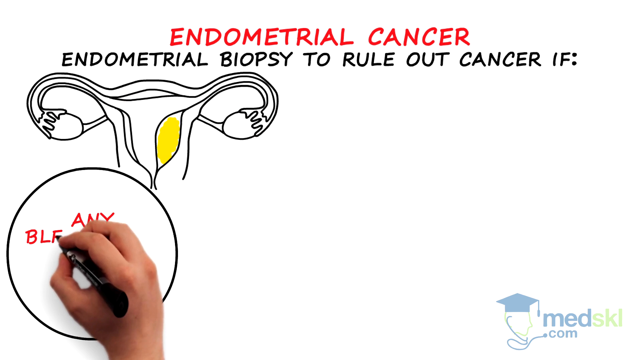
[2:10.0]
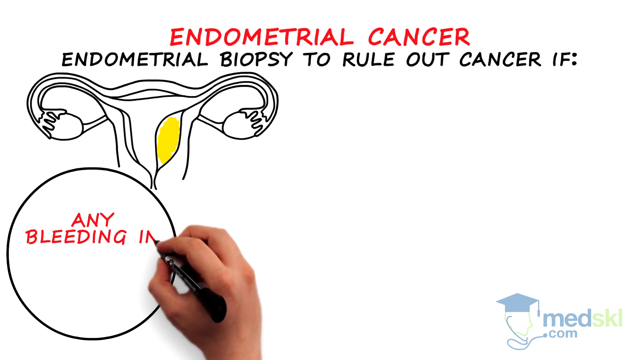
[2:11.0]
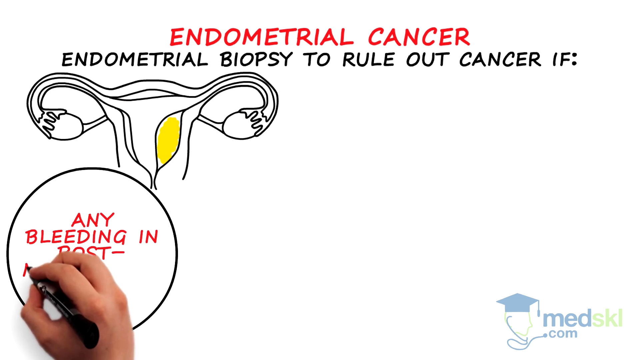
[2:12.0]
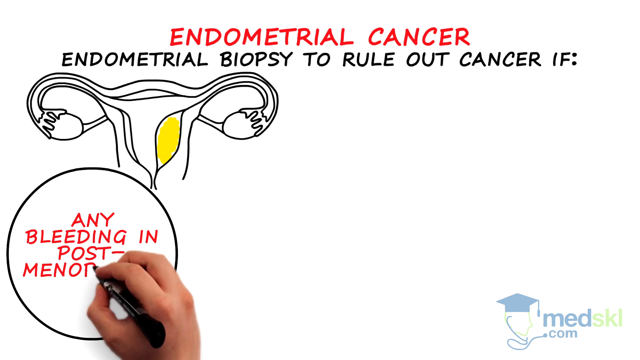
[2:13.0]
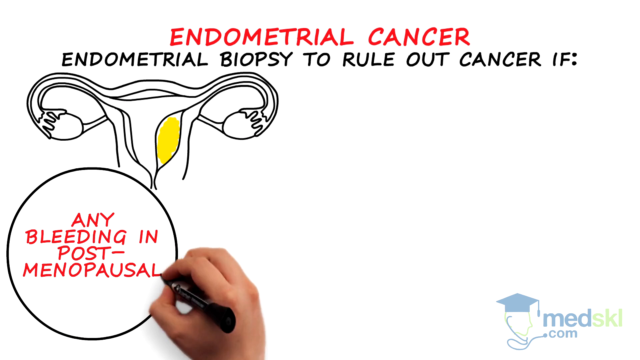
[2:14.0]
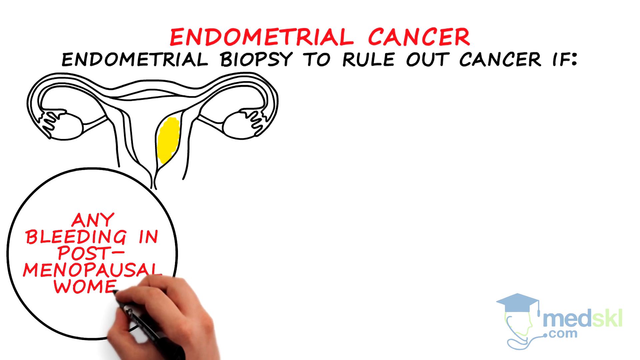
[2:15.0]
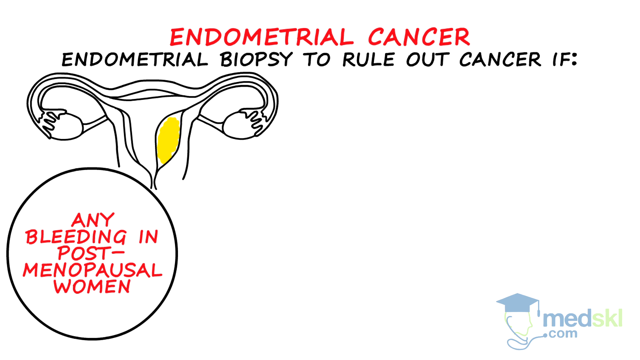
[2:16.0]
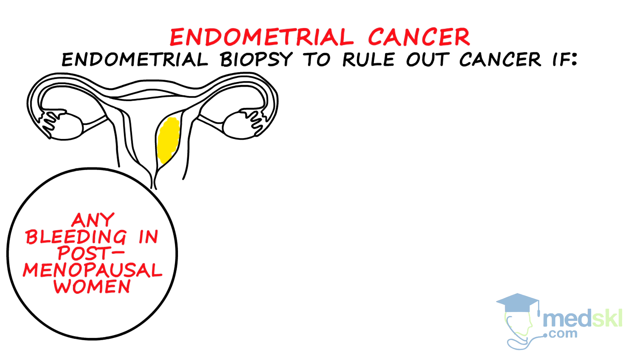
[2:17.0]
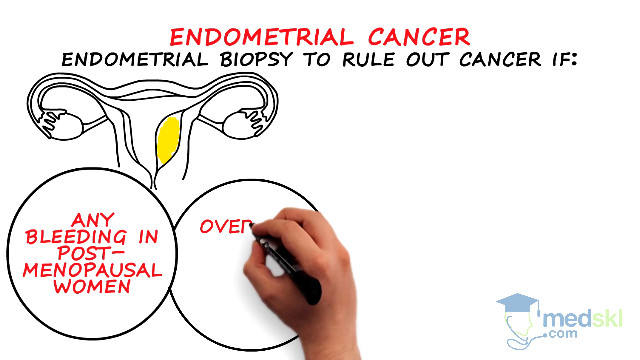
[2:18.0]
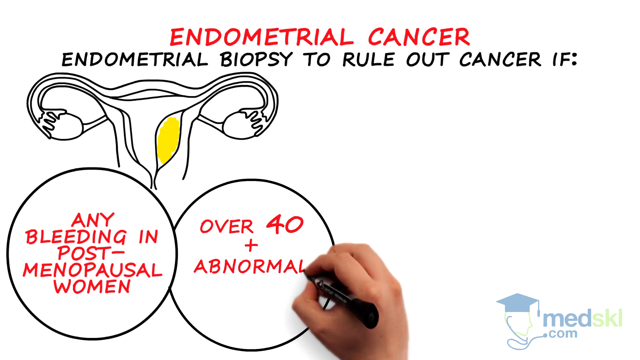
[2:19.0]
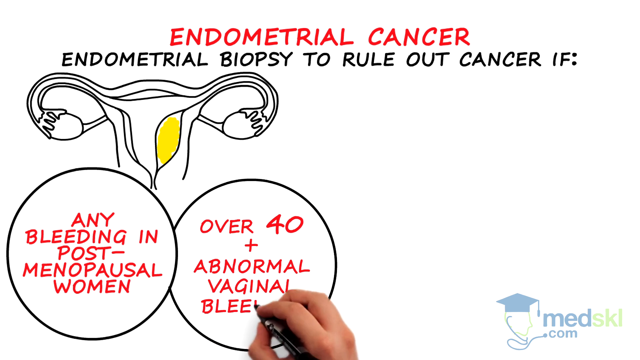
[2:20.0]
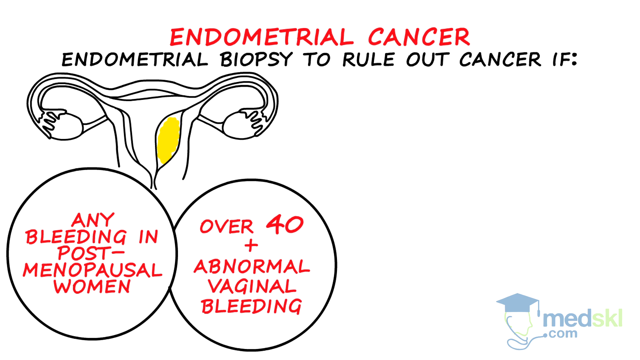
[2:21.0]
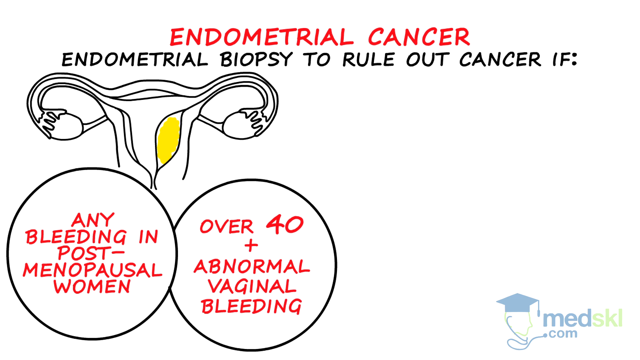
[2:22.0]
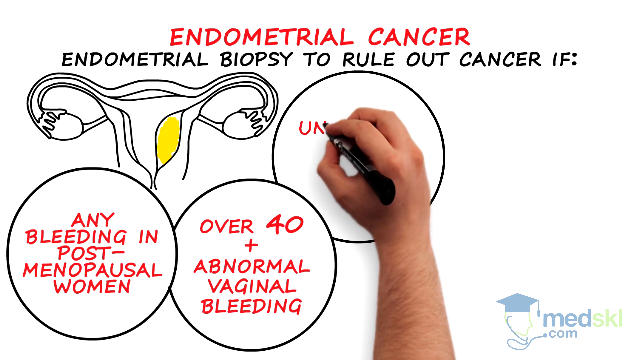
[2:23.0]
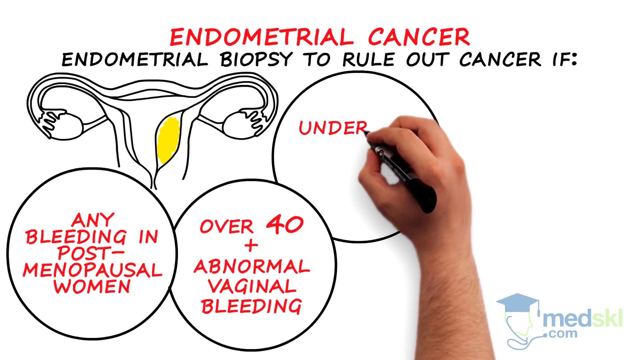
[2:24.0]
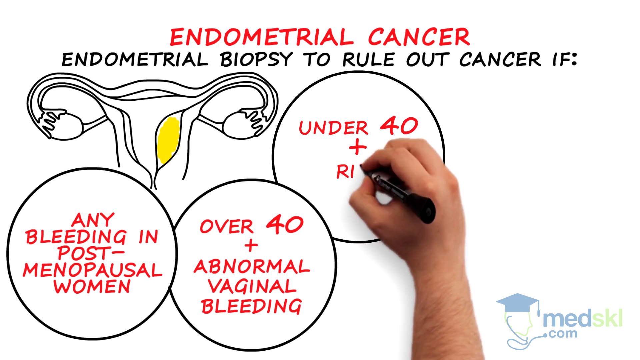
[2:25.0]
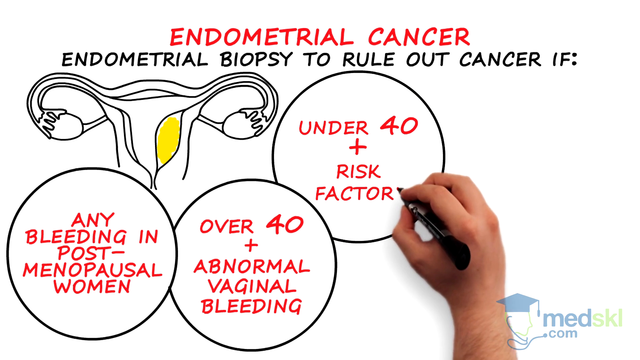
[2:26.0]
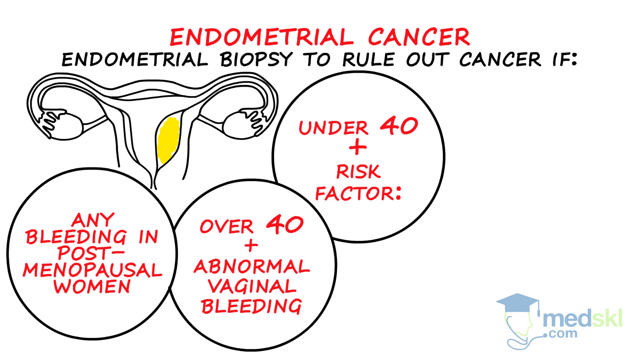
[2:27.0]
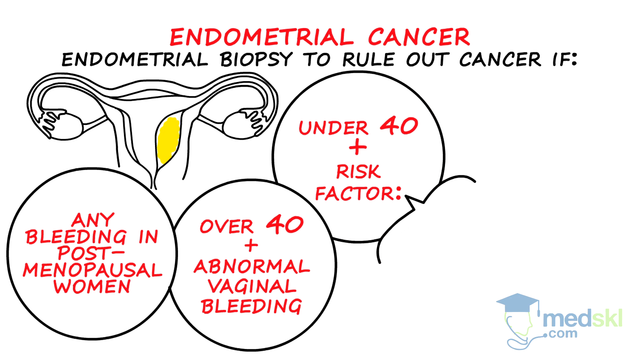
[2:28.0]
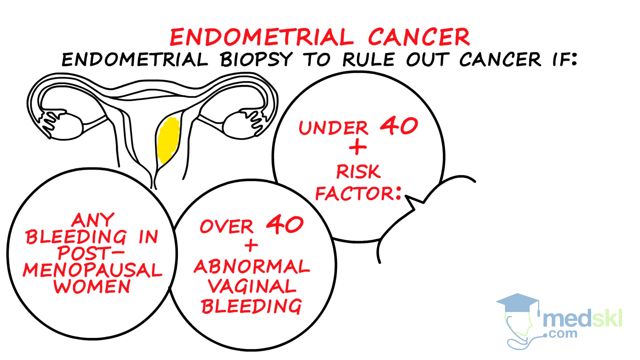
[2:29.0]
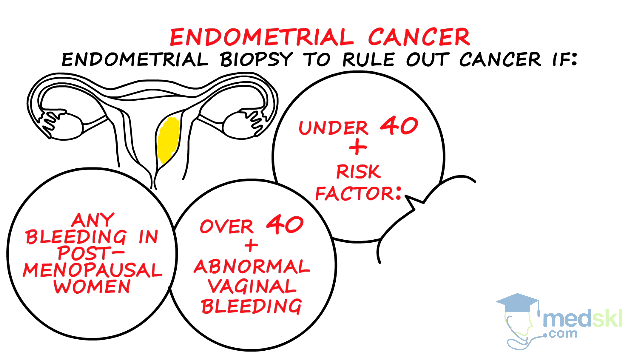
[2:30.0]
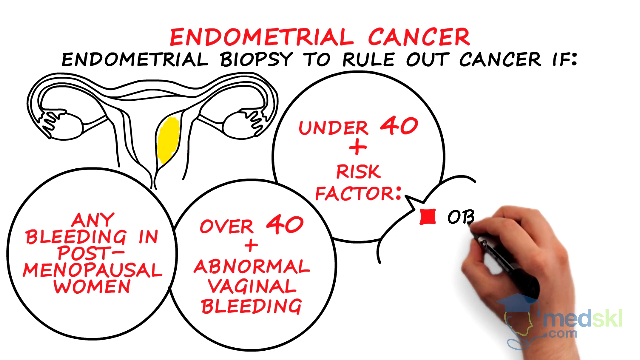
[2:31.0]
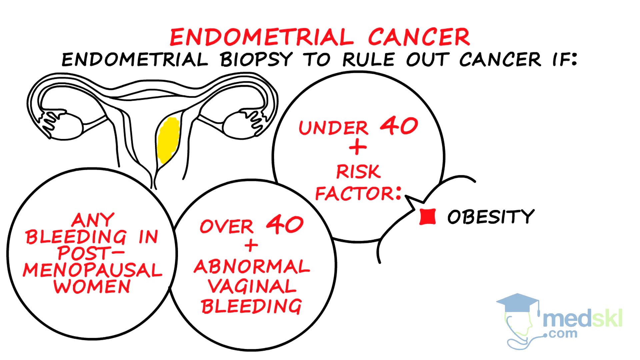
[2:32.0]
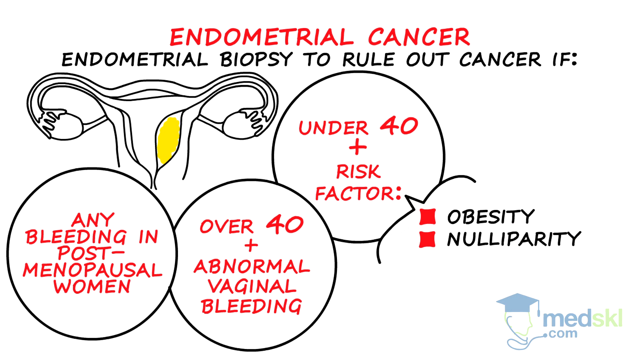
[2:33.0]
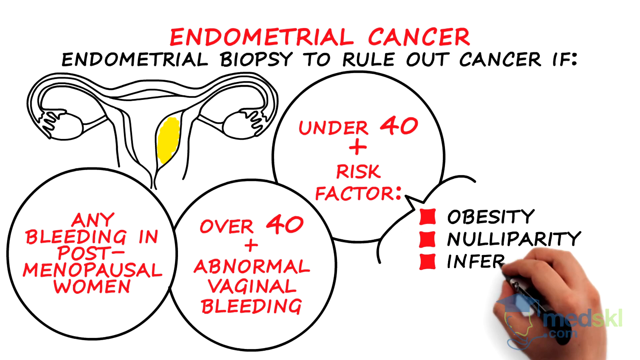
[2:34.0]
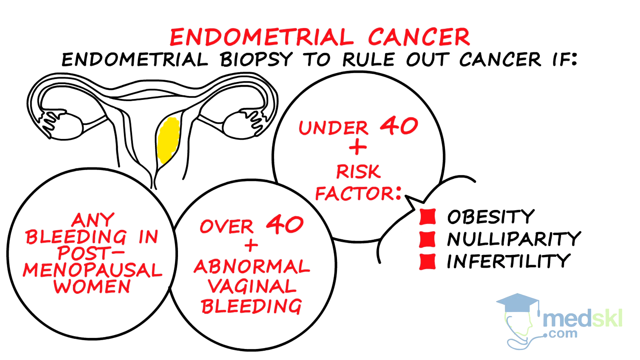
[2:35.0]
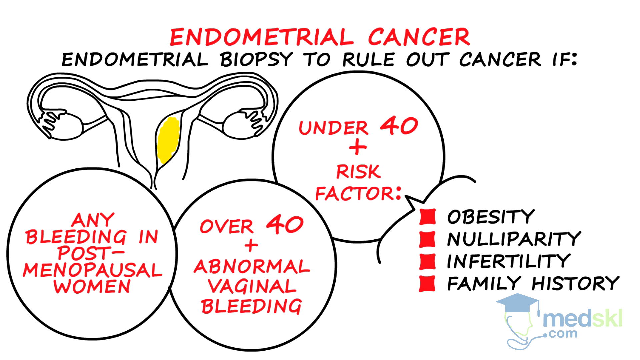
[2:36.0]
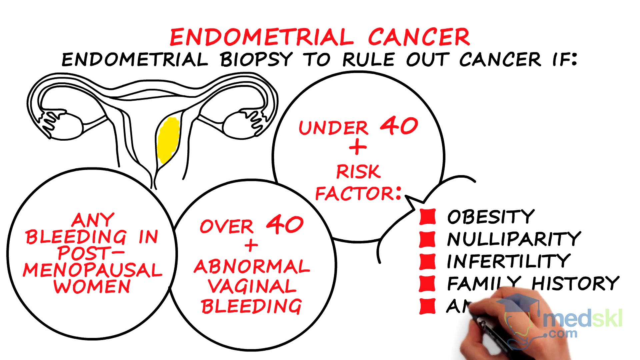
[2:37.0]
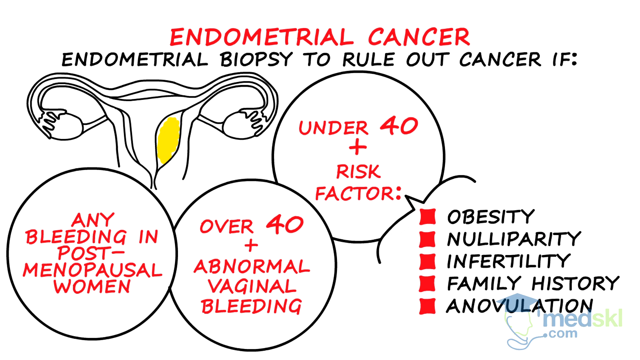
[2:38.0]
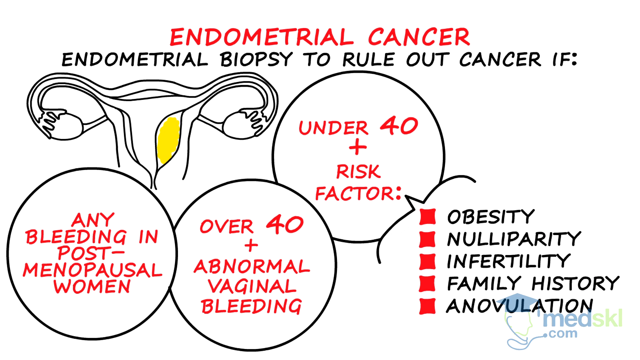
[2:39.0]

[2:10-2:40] On the bottom left, next to the uterus, the hand writes "any bleeding in post-menopausal women." To the right of this it writes "over 40 plus abnormal vaginal bleeding," and in the middle "under 40 plus risk factor." In the bottom right it then writes five bullet points: "obesity," "nulliparity," "infidelity," "family history," and "anovulation," and begins a sixth bullet point in the bottom right corner. The drawing of the uterus is in the upper left, with all this written information beside it.